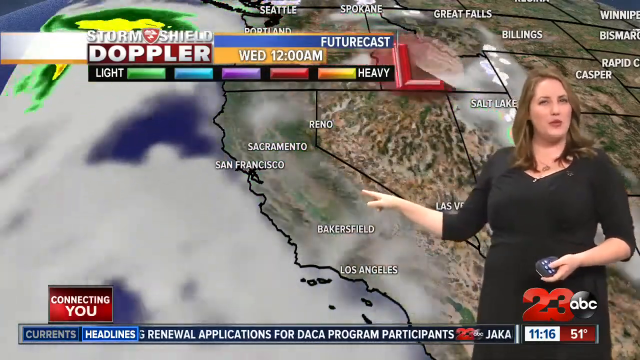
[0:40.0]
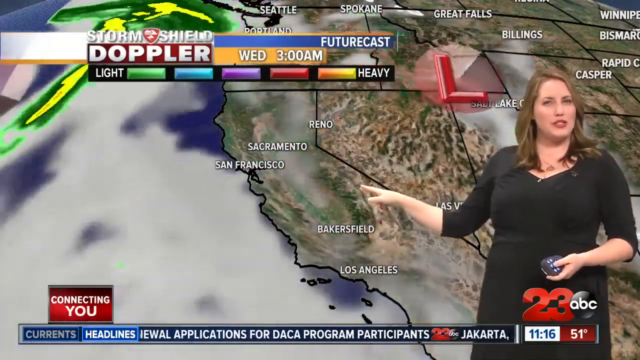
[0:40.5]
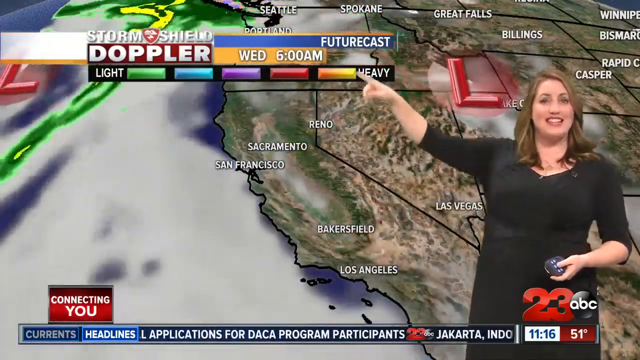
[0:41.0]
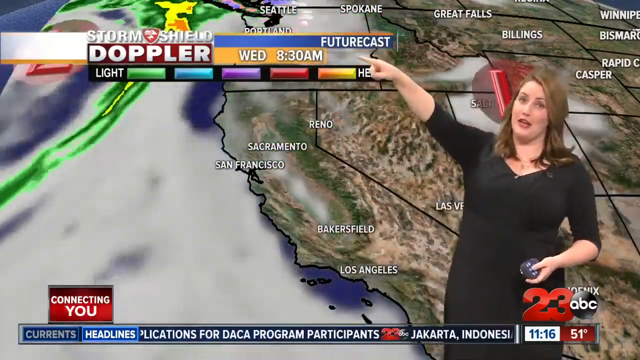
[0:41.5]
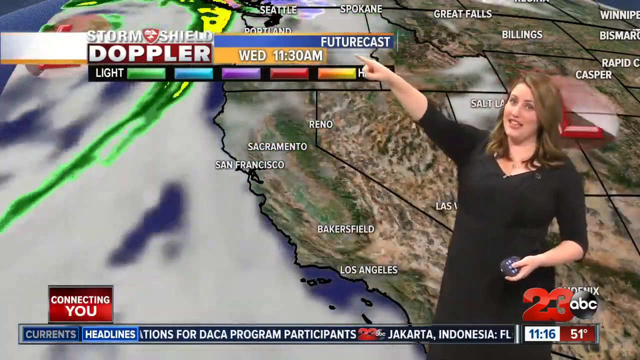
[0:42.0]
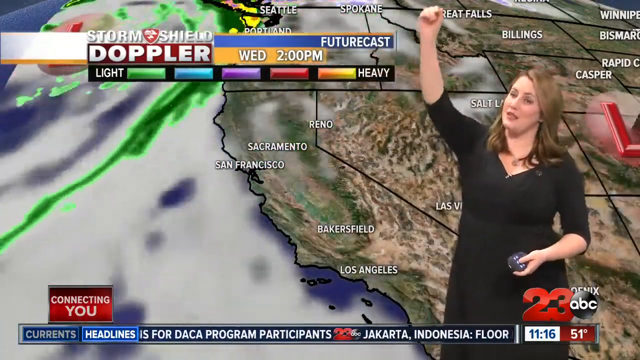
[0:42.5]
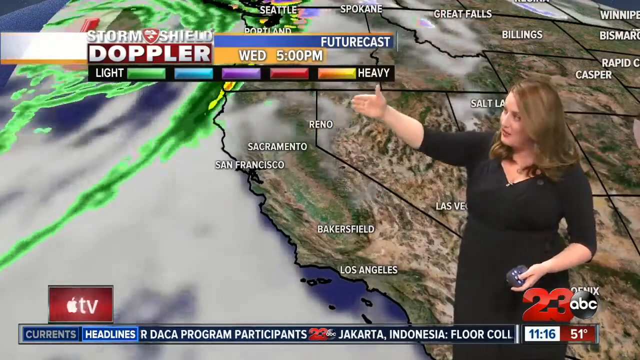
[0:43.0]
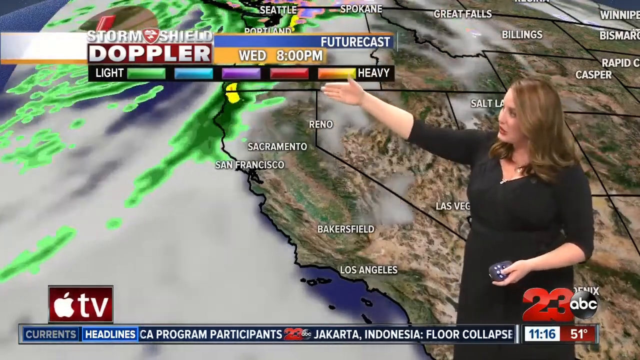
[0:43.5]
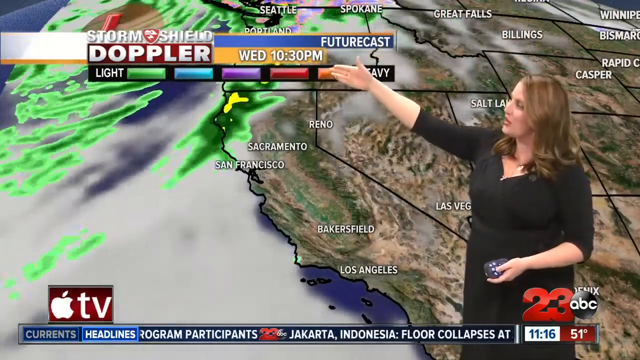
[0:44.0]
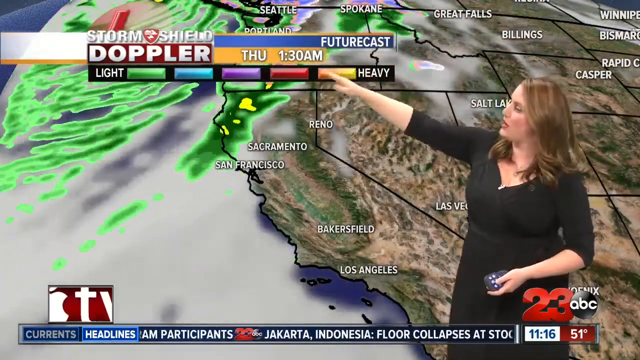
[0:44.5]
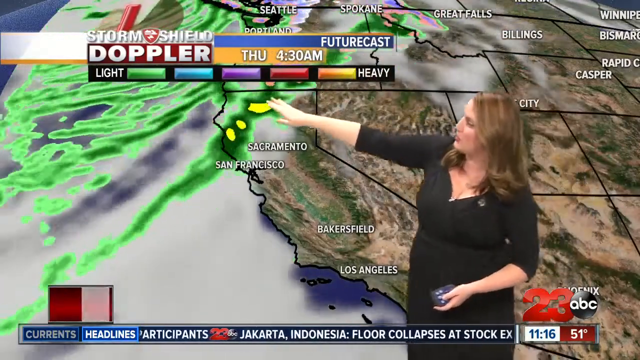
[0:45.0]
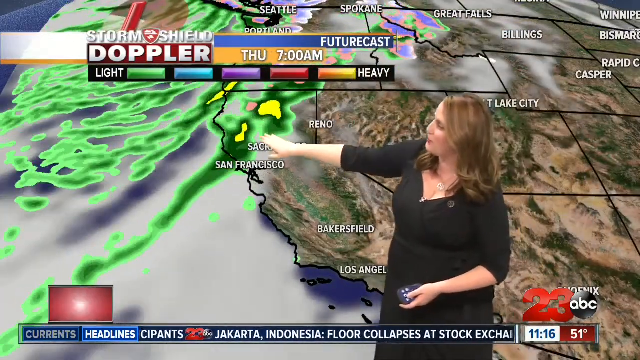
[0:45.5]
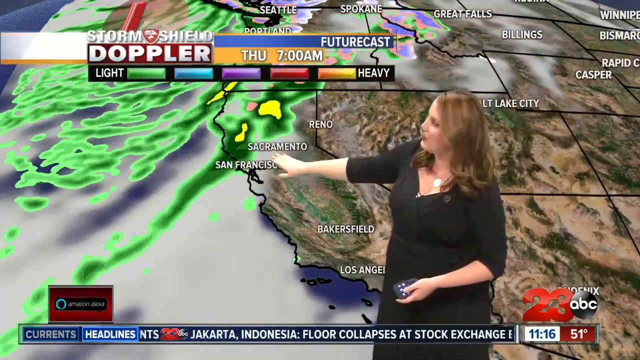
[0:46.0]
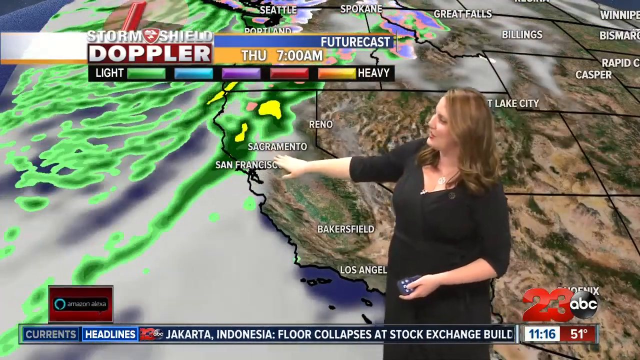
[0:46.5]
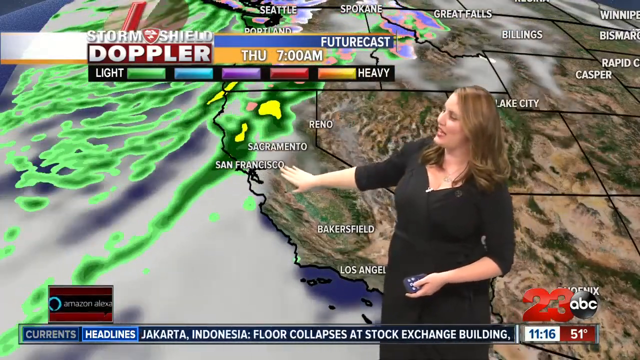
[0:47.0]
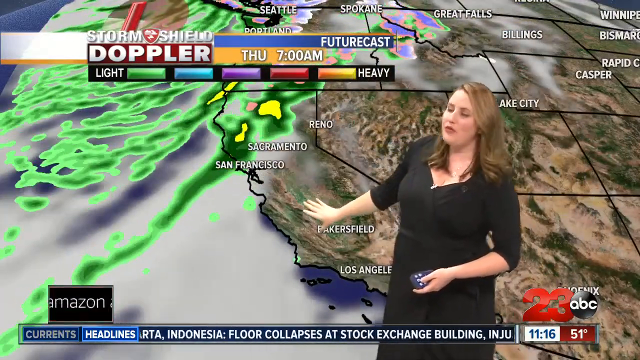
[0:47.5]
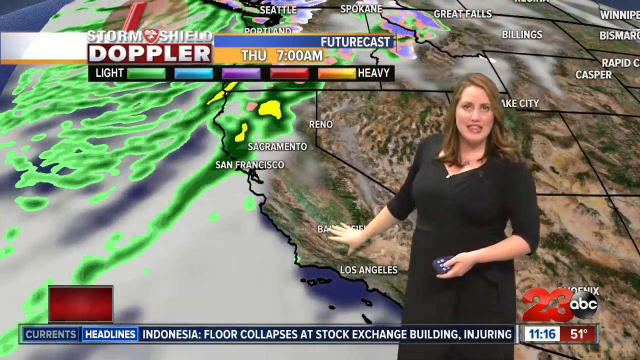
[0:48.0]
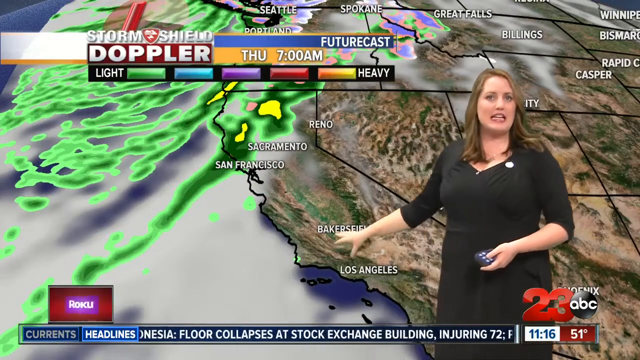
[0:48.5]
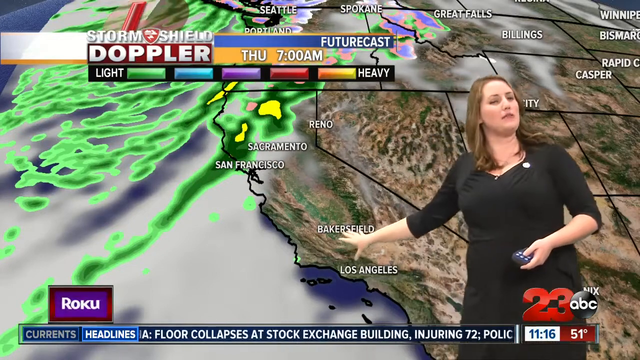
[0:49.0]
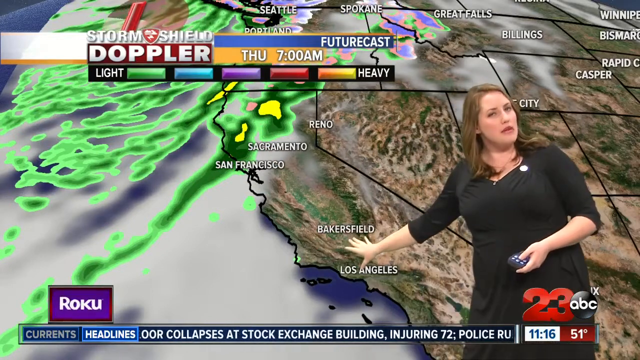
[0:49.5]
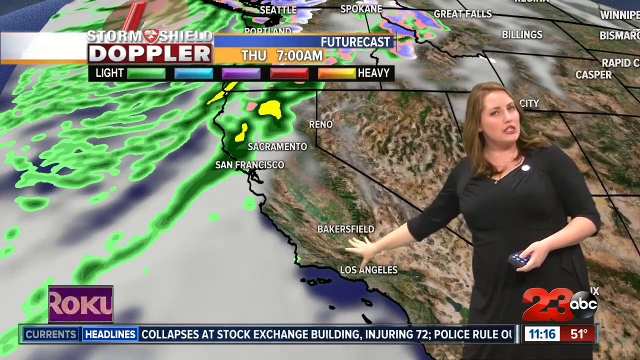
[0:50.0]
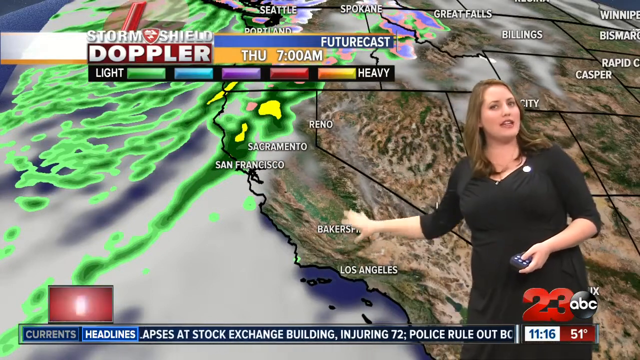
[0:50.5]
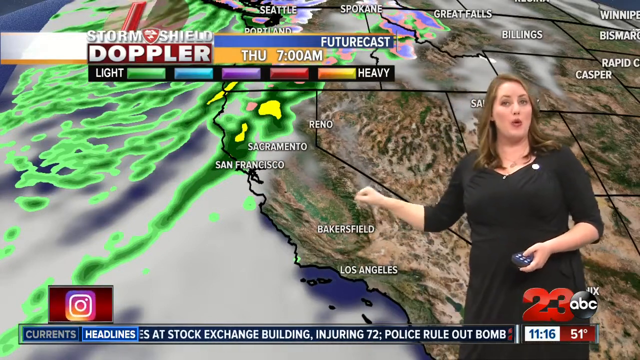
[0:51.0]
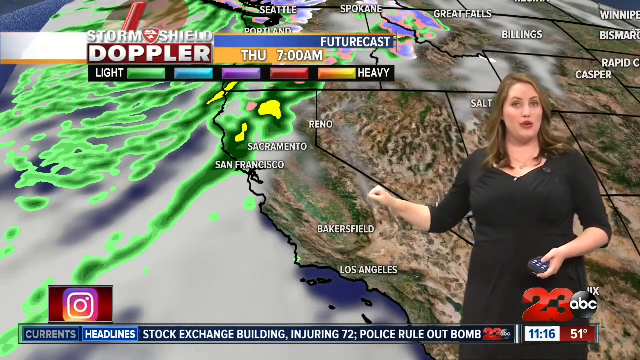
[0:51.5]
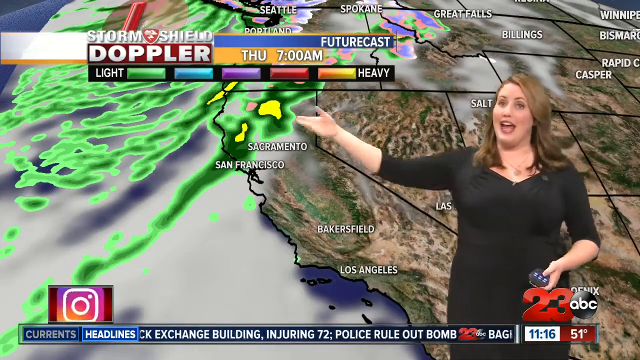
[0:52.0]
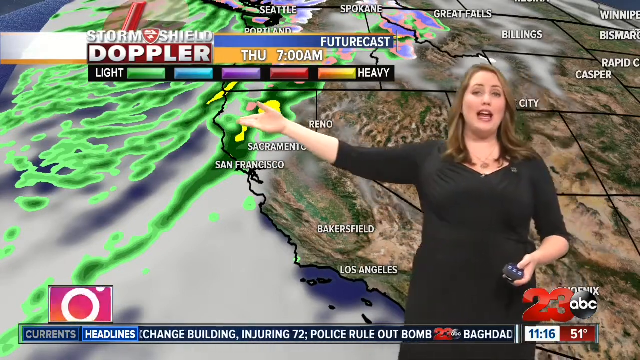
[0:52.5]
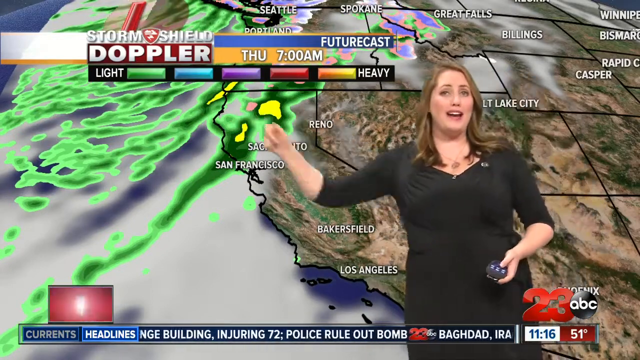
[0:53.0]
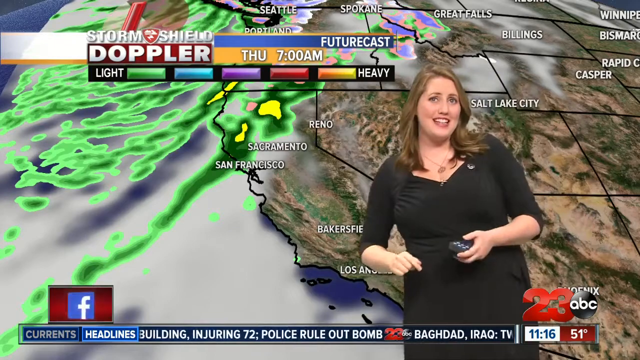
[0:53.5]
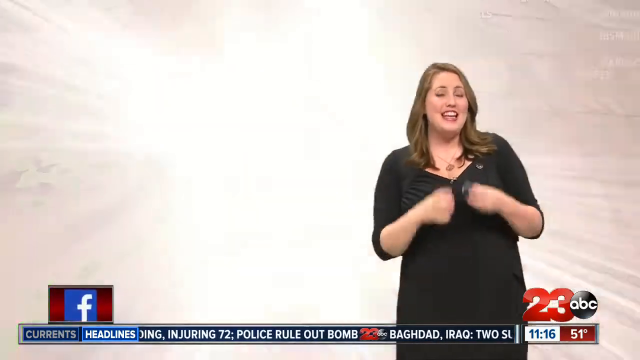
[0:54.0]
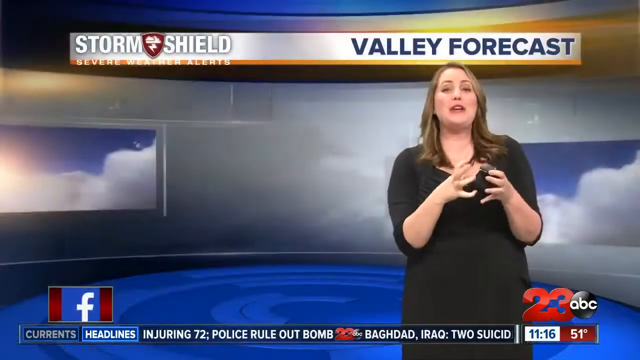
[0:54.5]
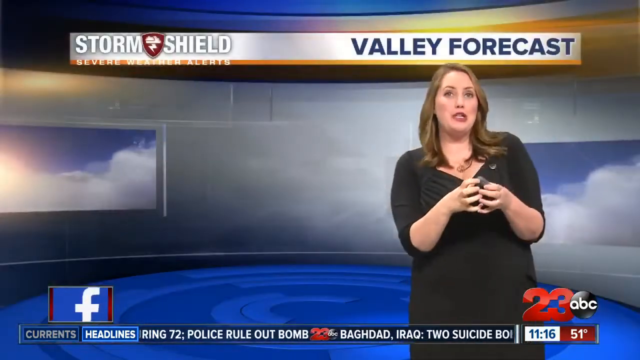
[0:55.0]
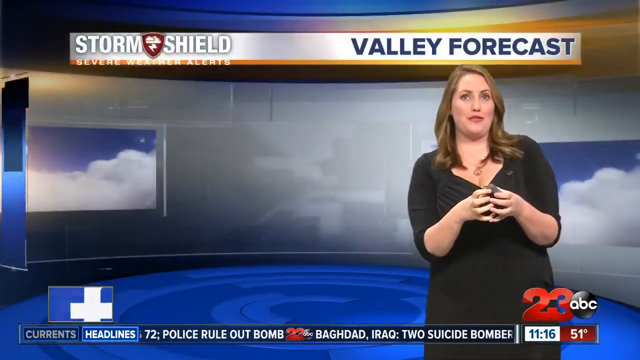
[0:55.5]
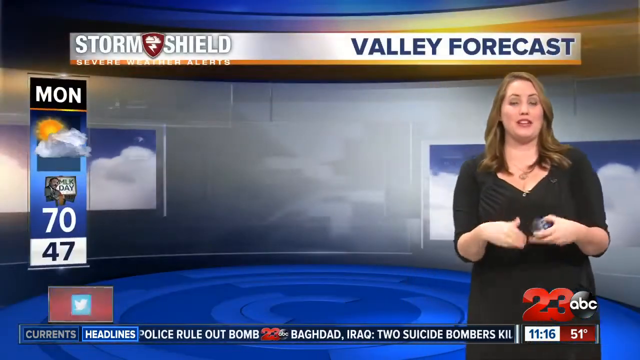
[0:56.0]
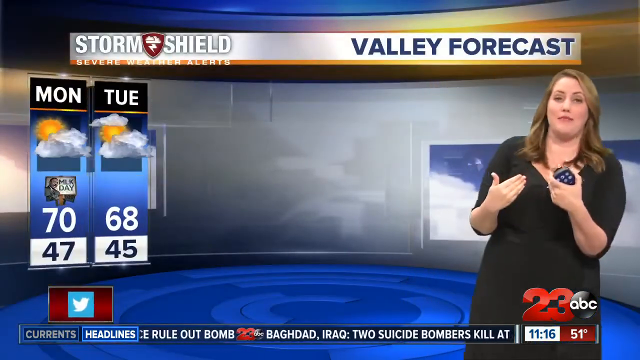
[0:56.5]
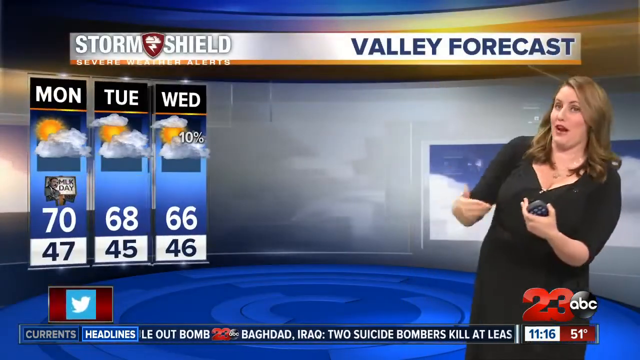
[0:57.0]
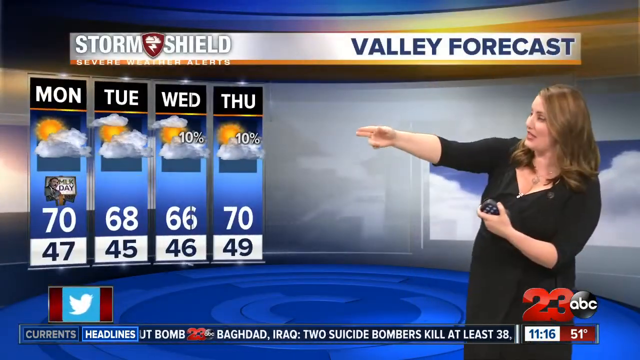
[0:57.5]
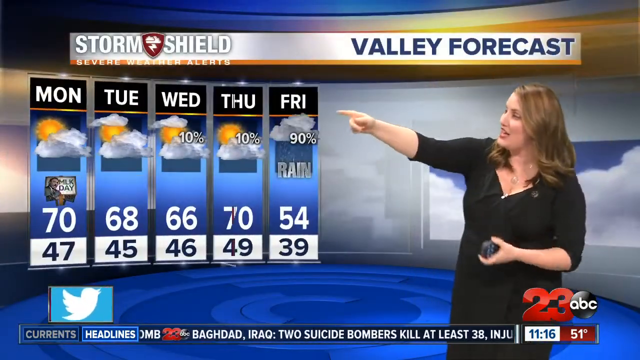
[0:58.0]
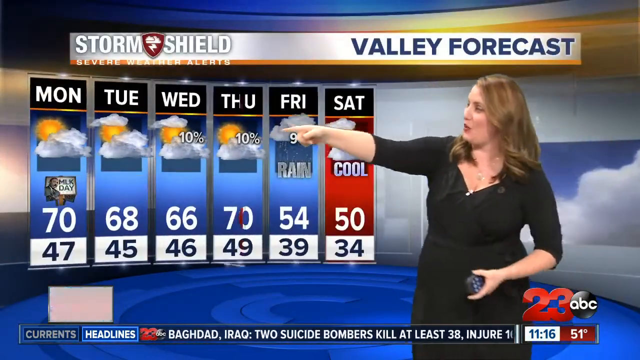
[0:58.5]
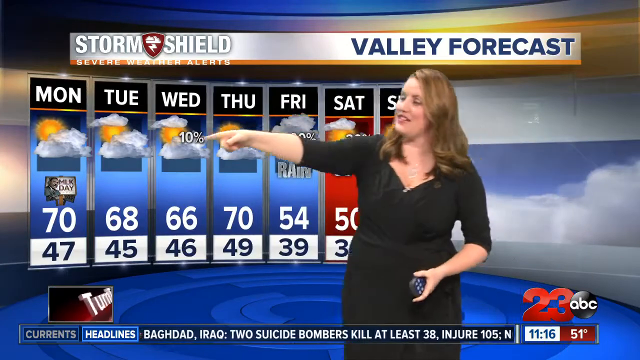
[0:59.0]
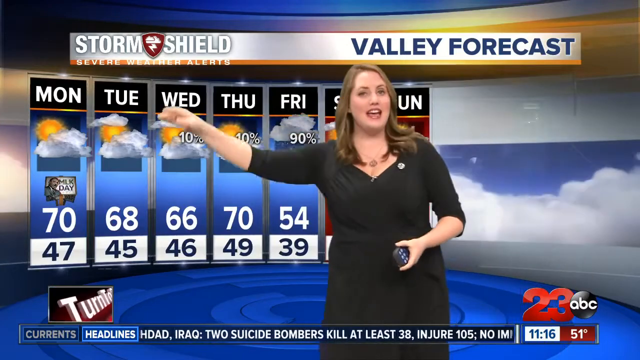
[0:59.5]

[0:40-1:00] The ABC News Channel 23 storm shield severe weather alert for Yosemite National Park and Bakersfield shows the western edge of California and weather coming in off the coast on Doppler, with a scale reading from light to heavy. Green colors, meaning light, appear far to the north, up near San Francisco and into Alaska, as green bands coming through, and the meteorologist uses her hand to point to things. She then switches to the valley forecast, which shows a lot of clouds and warmer weather for Monday through Sunday. Each day appears in a vertical bar with the name of the day at the top, a graphic of the kind of weather, then the high and the low. Most of the days look like fairly good weather.